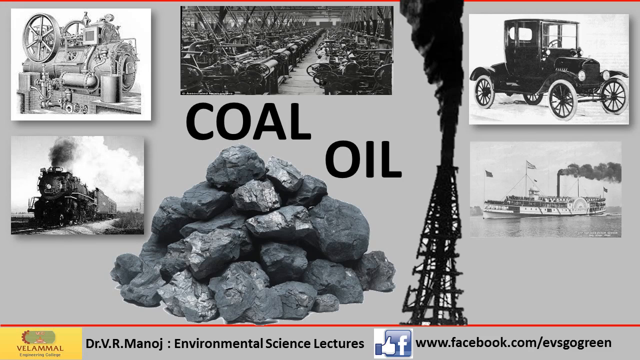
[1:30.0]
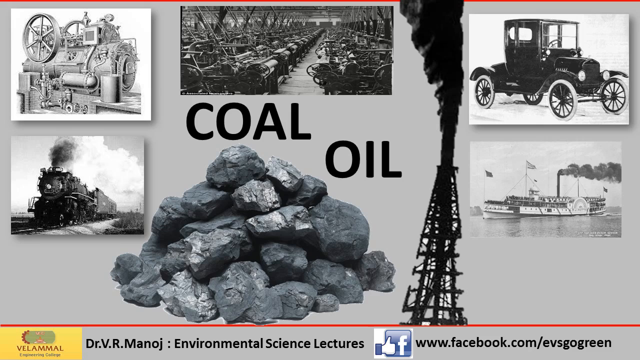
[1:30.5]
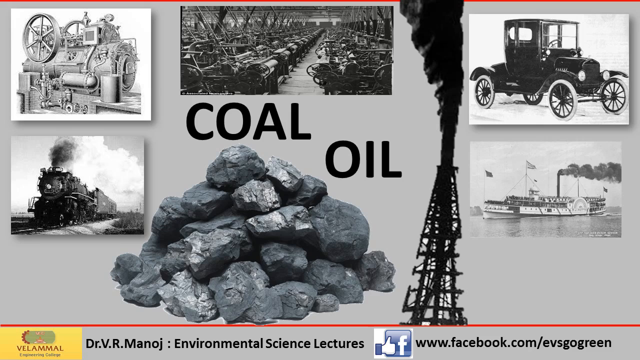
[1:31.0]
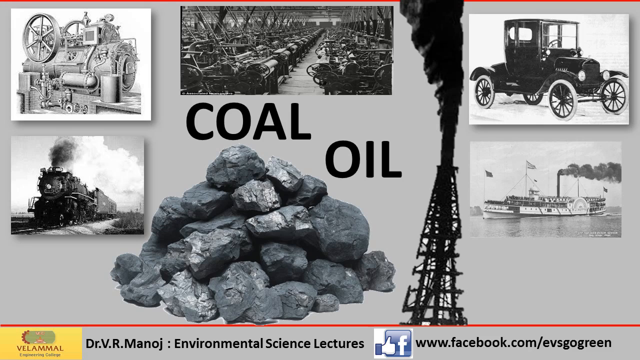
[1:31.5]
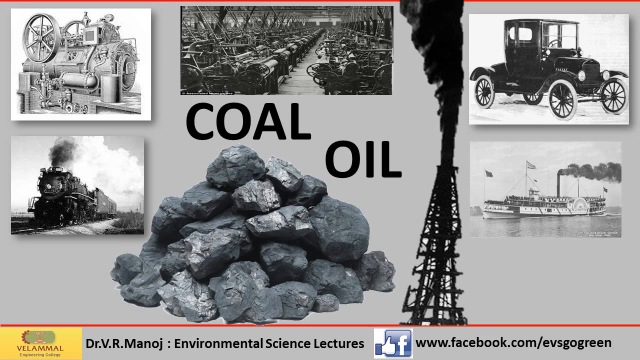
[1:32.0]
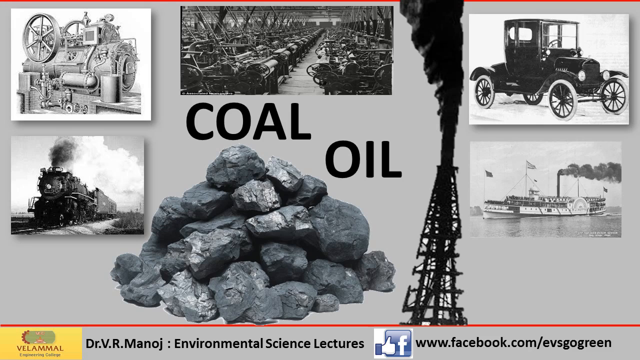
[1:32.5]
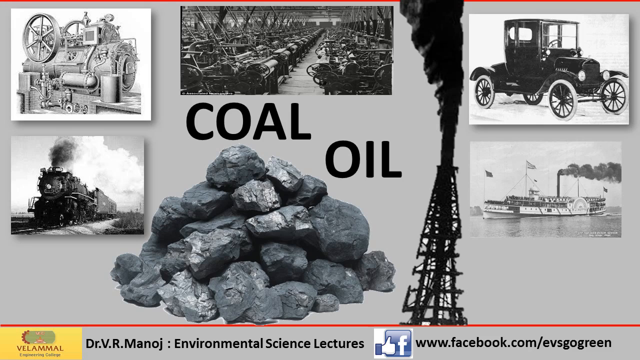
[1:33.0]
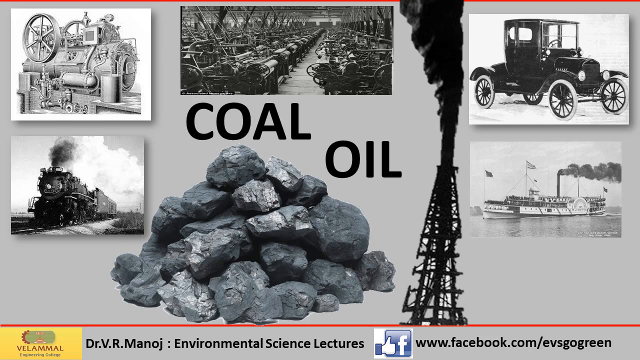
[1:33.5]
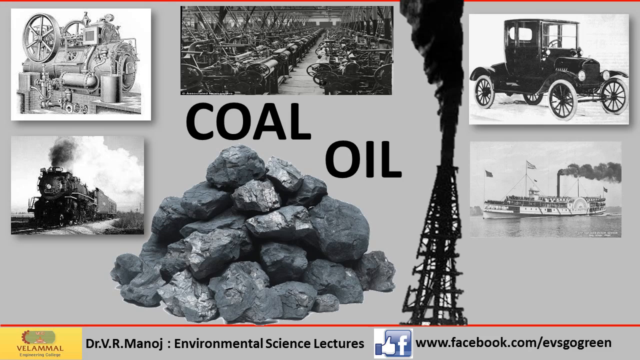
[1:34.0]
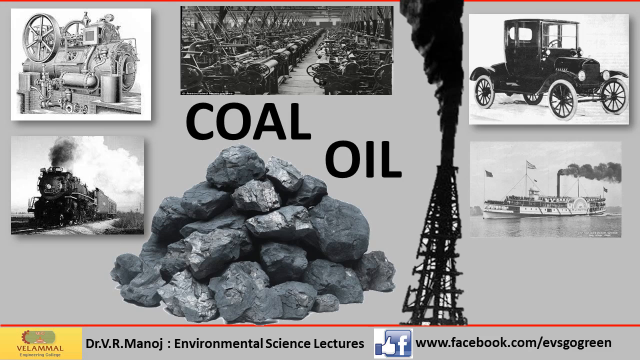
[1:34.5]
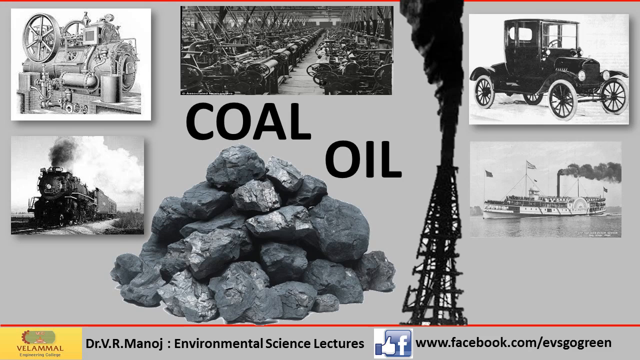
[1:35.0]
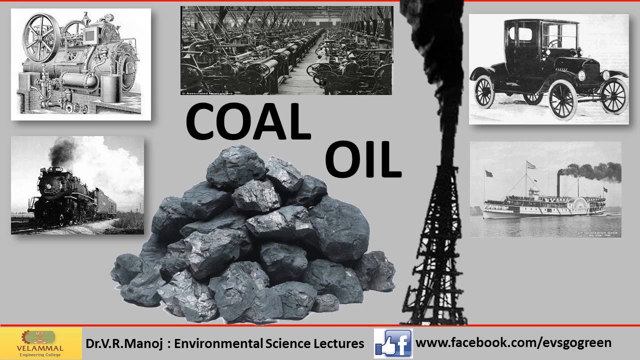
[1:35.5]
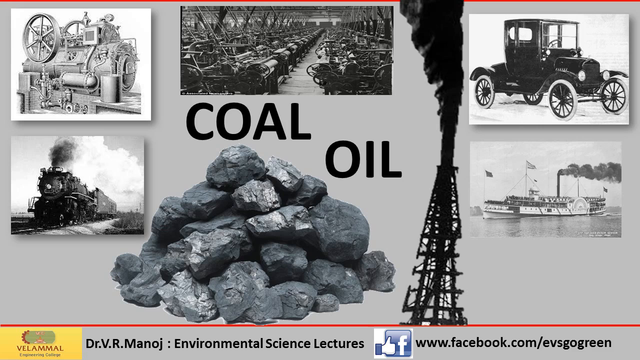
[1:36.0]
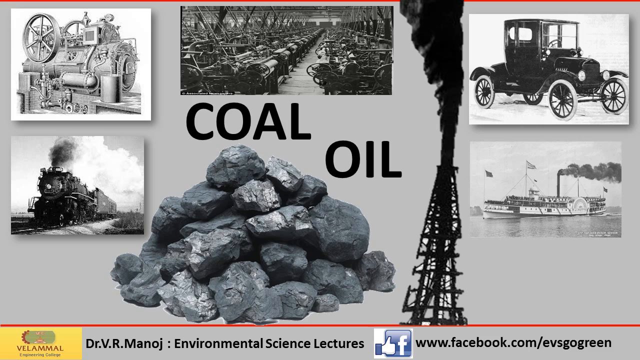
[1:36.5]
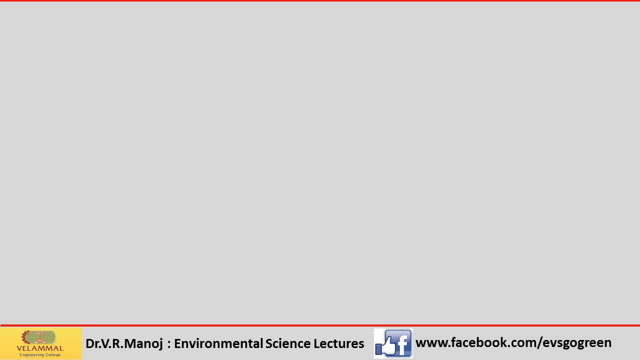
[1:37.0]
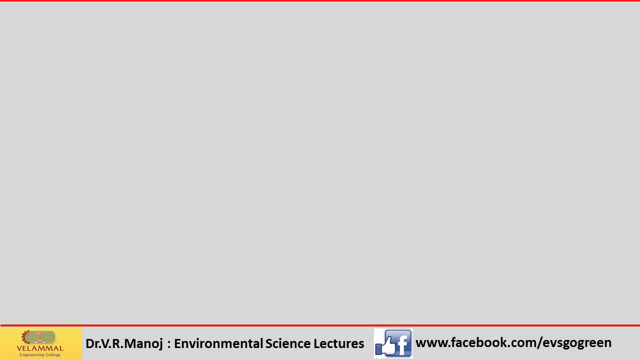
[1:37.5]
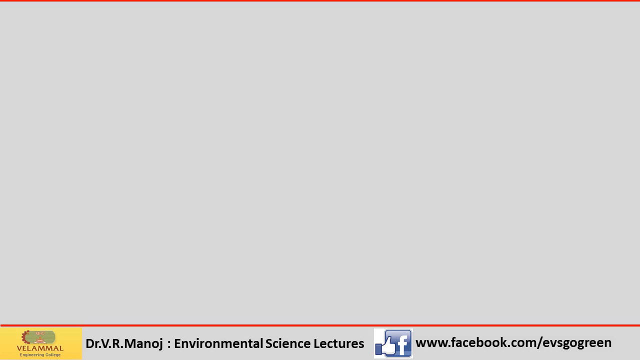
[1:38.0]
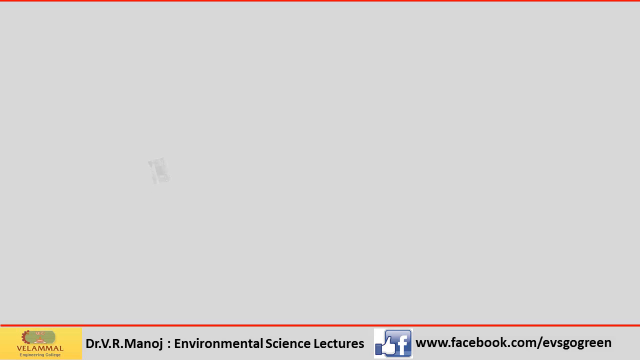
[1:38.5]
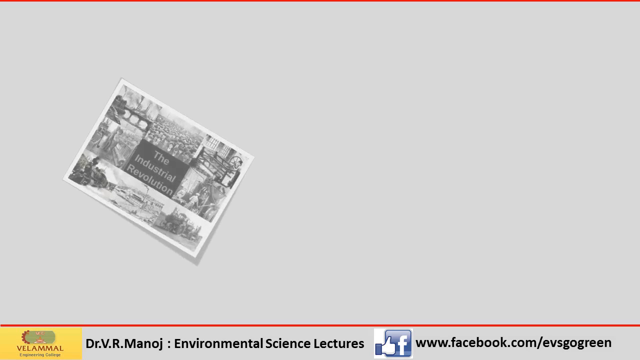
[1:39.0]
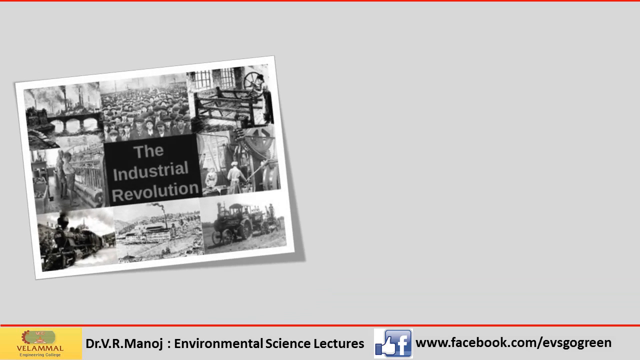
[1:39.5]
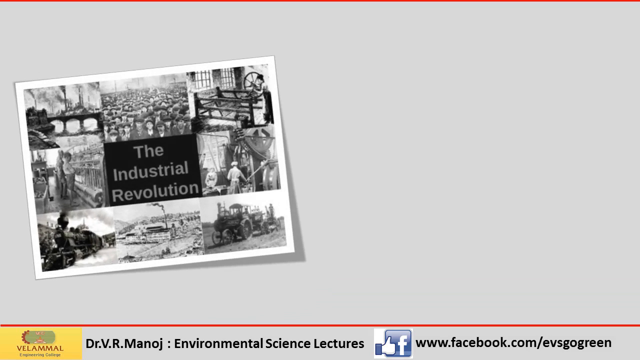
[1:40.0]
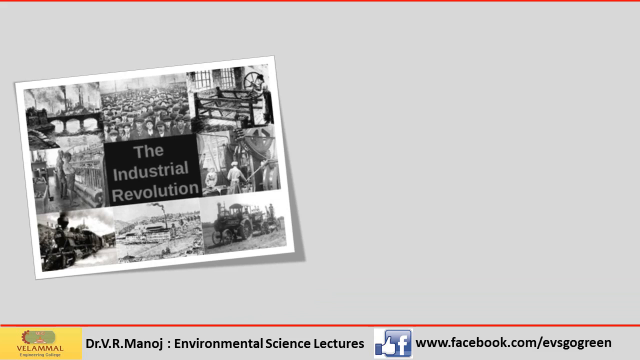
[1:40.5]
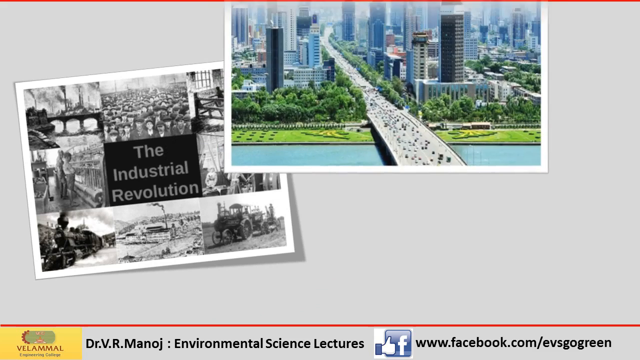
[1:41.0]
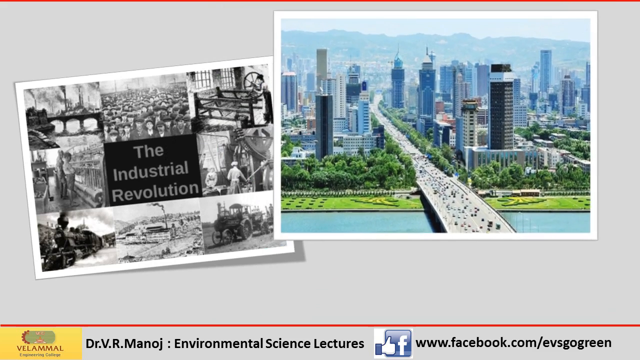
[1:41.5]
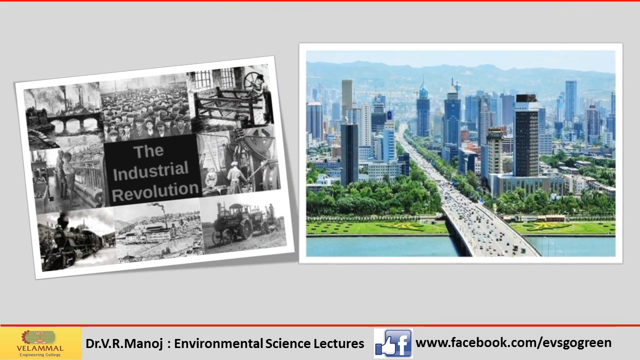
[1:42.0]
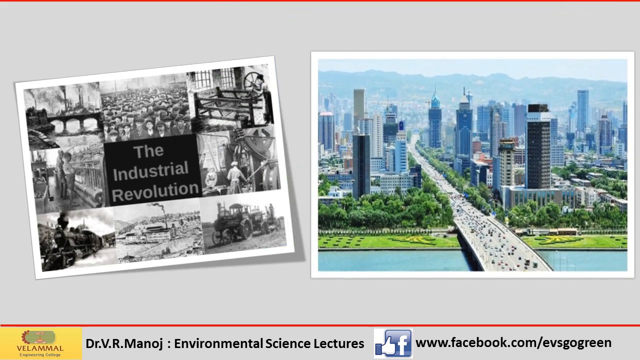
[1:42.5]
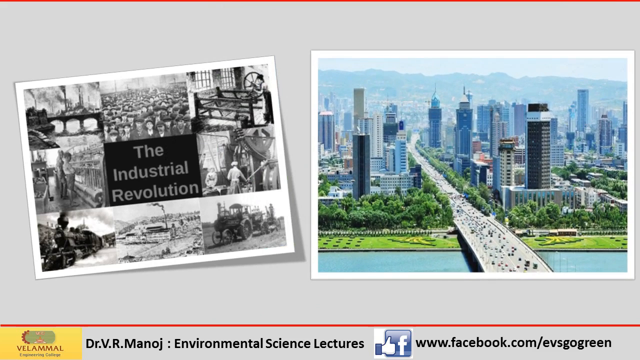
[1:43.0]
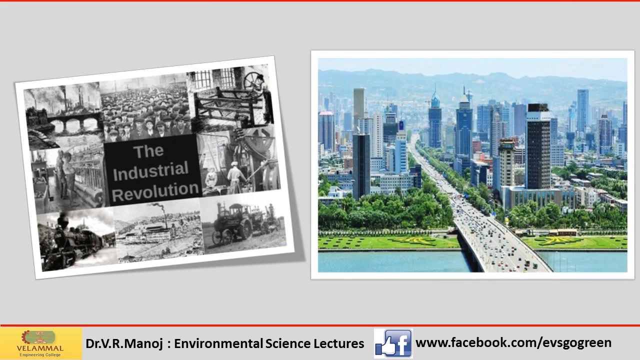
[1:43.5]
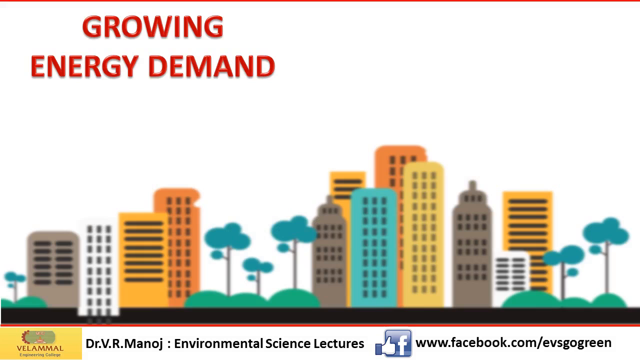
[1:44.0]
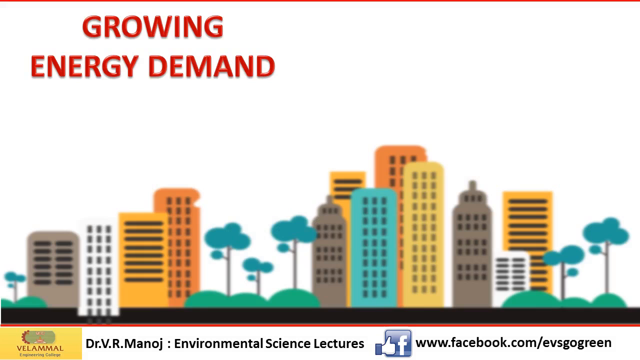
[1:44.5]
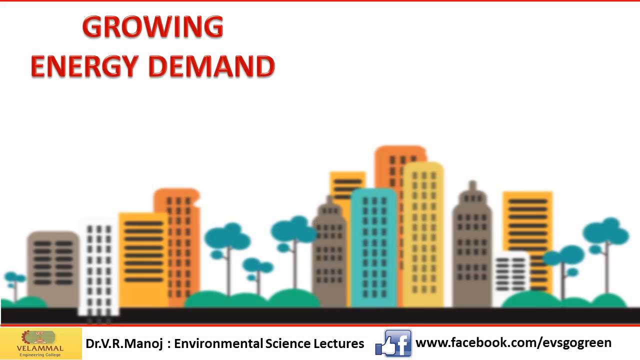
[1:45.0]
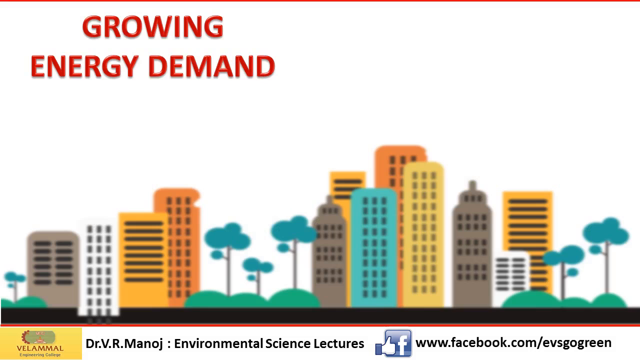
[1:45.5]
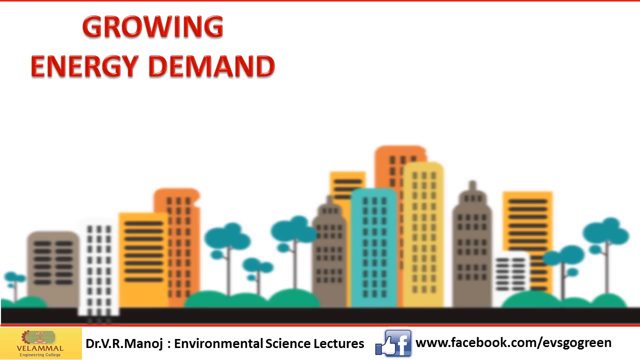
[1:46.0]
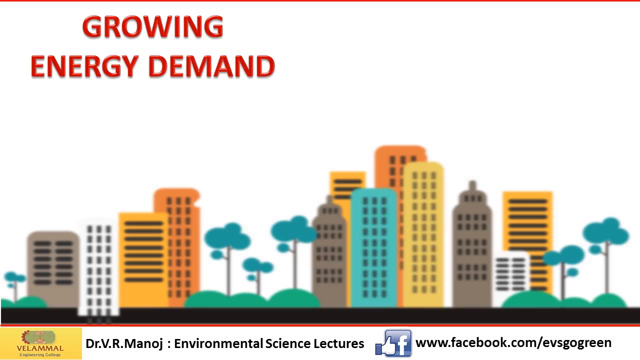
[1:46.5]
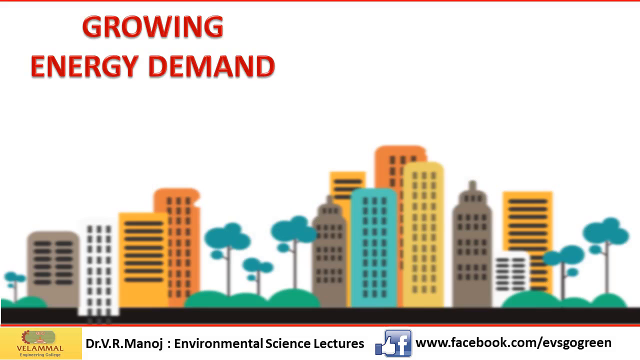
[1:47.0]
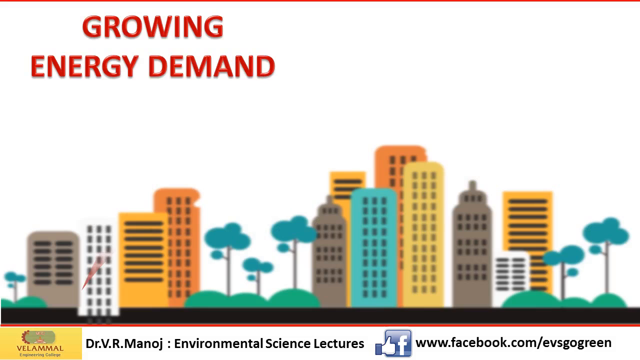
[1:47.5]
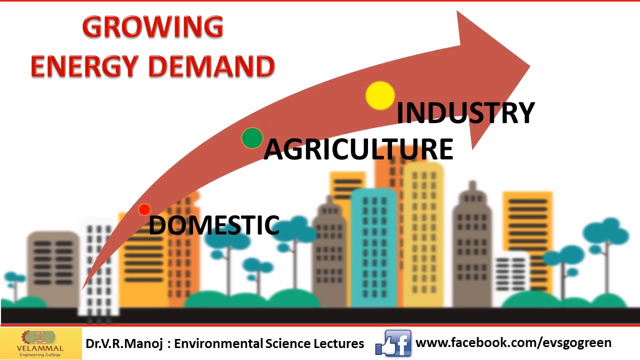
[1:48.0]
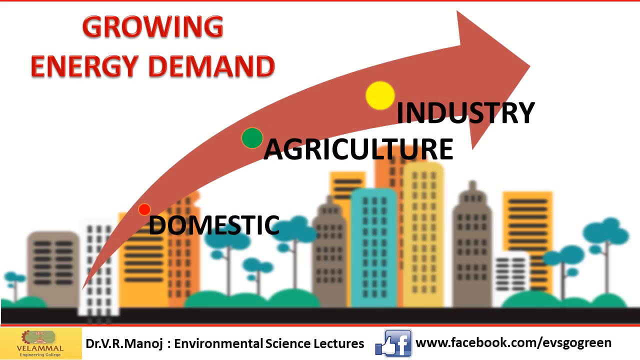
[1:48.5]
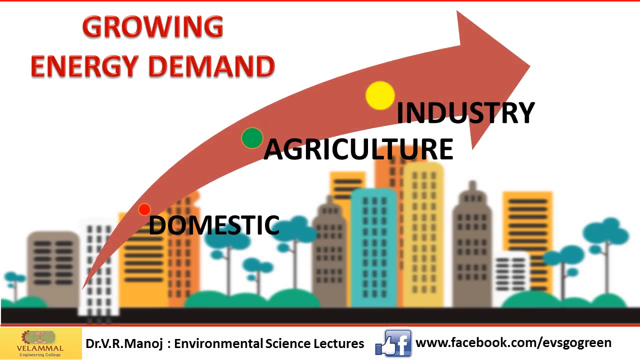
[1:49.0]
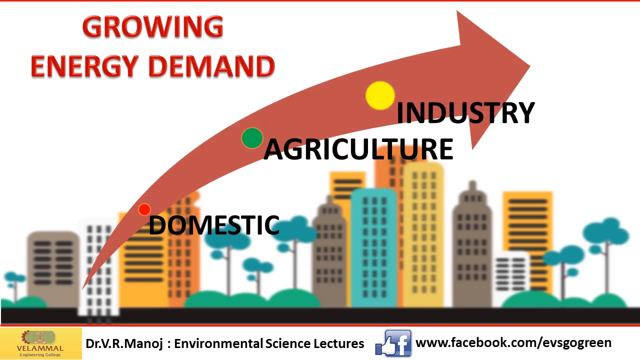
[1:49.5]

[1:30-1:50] A banner at the bottom of the screen reads "Dr. B. R. Manoj, Environmental Science Lectures" along with his Facebook address. One by one, illustrations of what man has developed appear: the train in the upper left corner, the wagons in the center, the first early car in the upper right corner, and beneath that a steam ship, all in black and white against a gray background. A pile of coal is at the front center, and an oil tower has black smoke coming out of it. The screen then turns gray, and a rectangular image appears filled with smaller black and white photos of the Industrial Revolution, showing trains, vehicles, train stations, coal mines and factories.